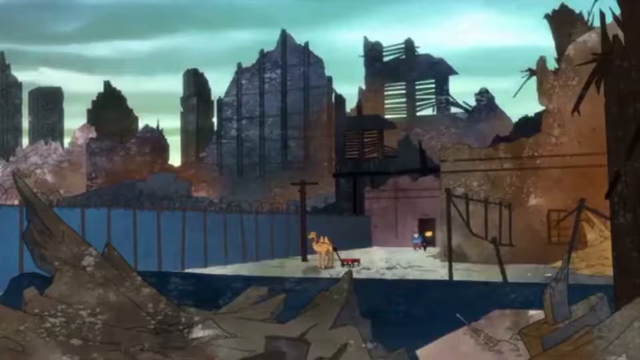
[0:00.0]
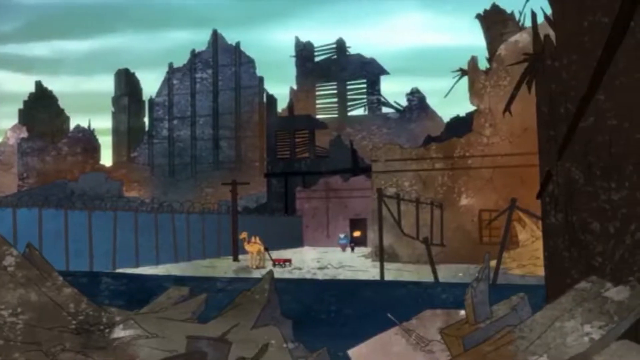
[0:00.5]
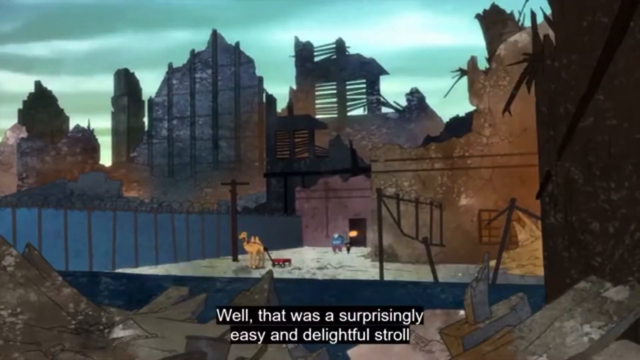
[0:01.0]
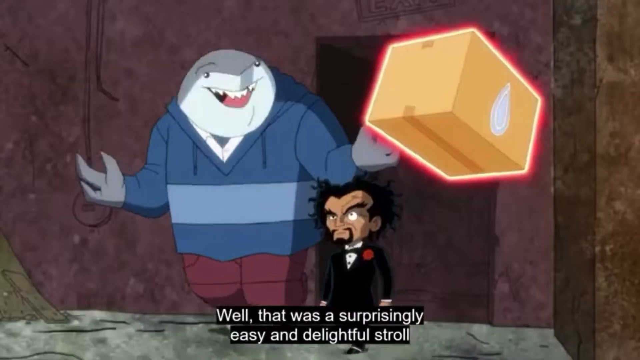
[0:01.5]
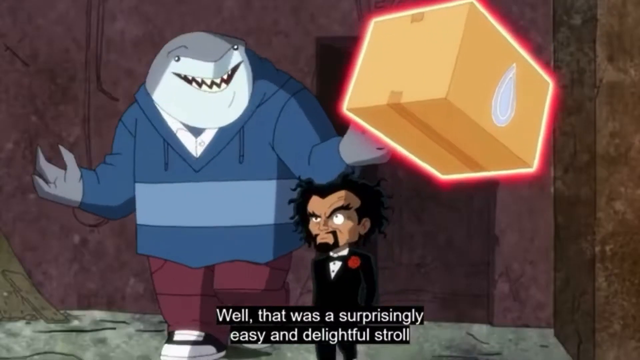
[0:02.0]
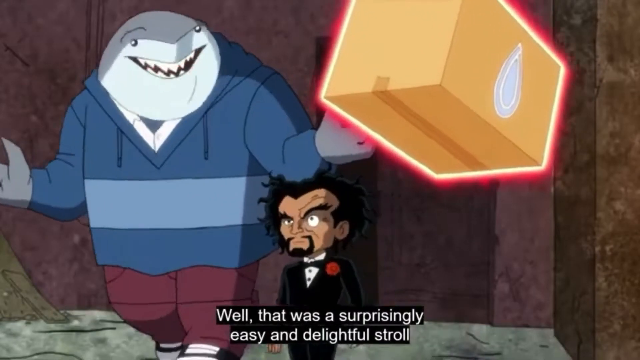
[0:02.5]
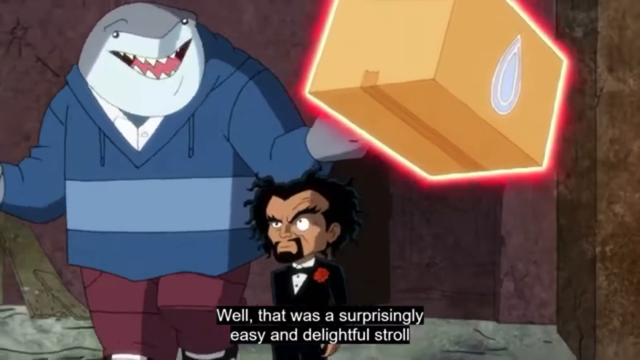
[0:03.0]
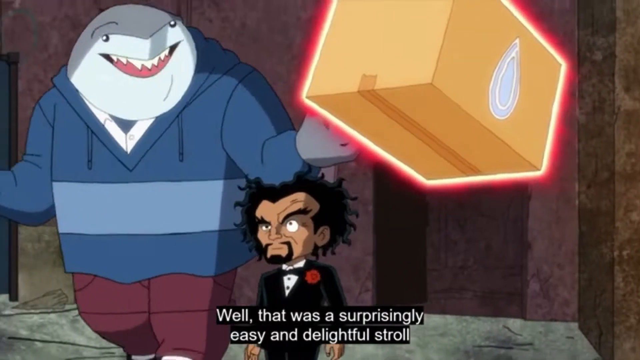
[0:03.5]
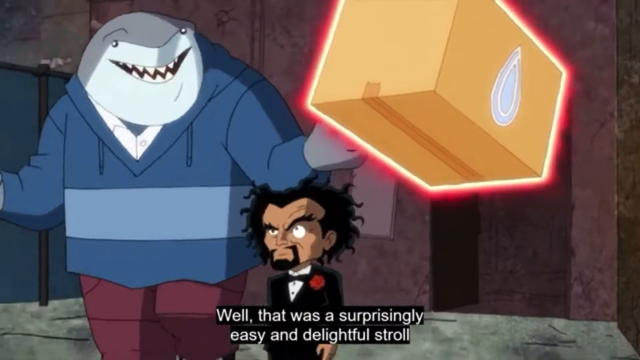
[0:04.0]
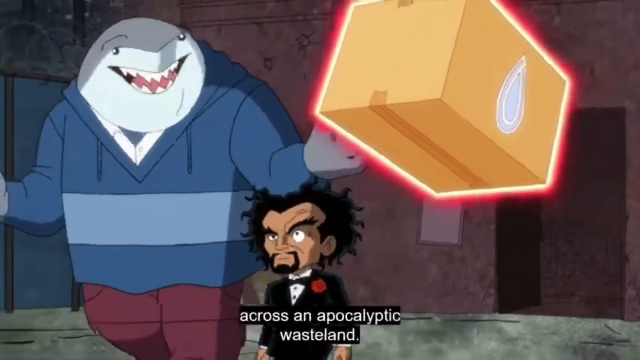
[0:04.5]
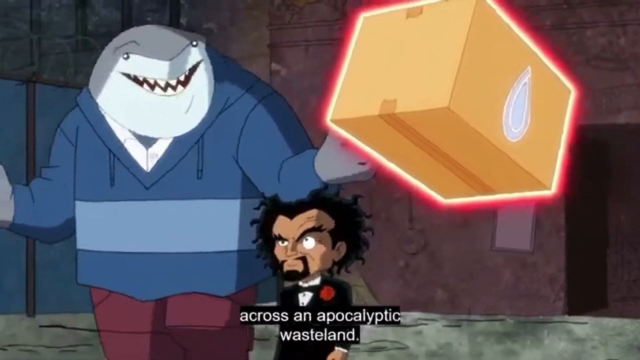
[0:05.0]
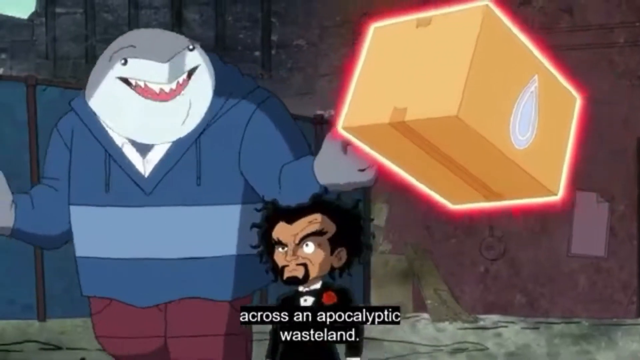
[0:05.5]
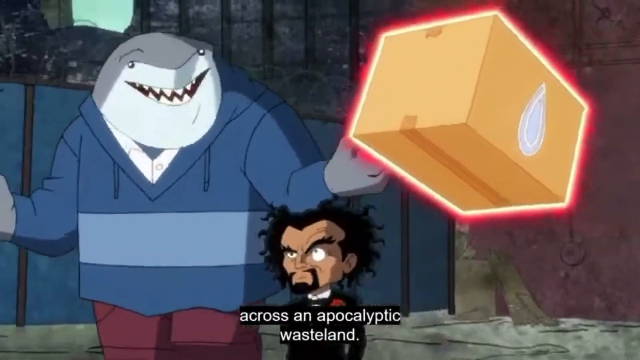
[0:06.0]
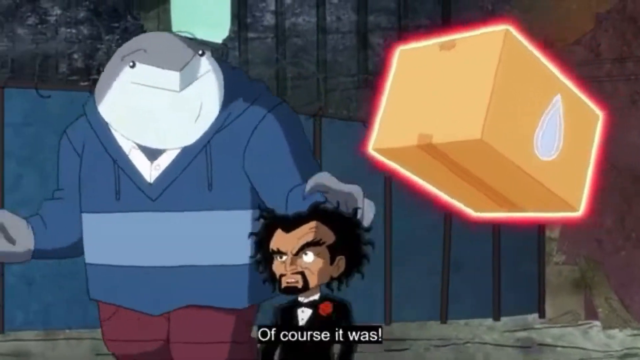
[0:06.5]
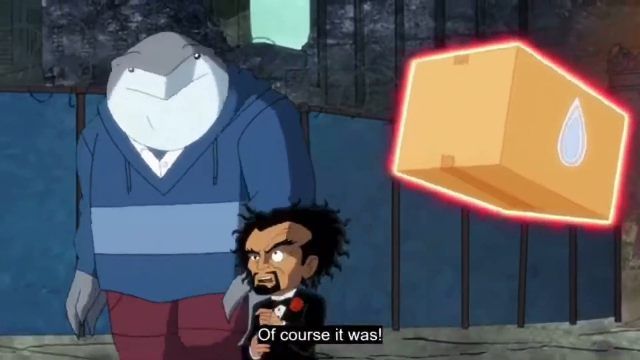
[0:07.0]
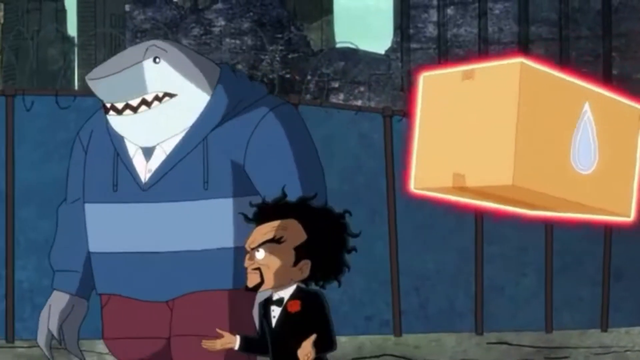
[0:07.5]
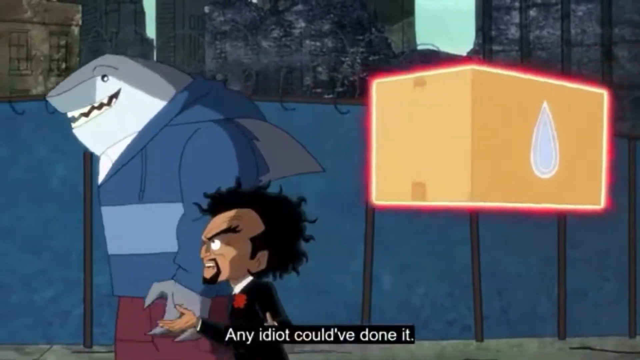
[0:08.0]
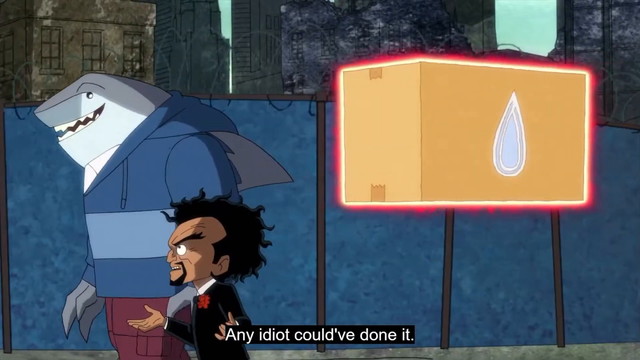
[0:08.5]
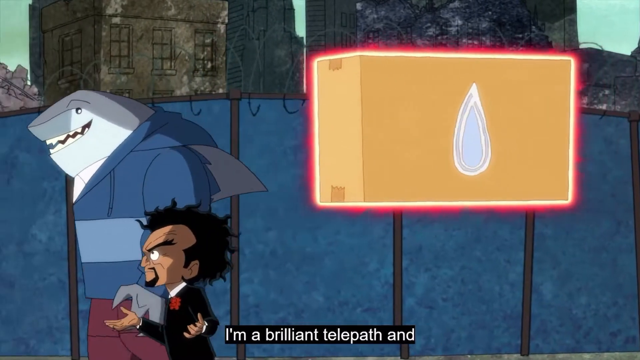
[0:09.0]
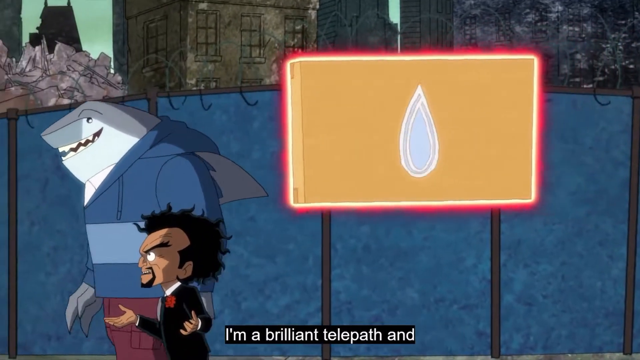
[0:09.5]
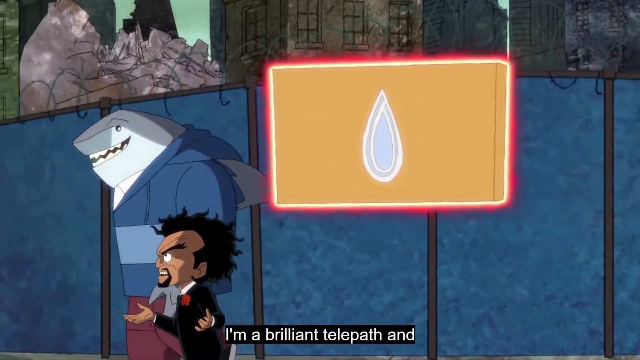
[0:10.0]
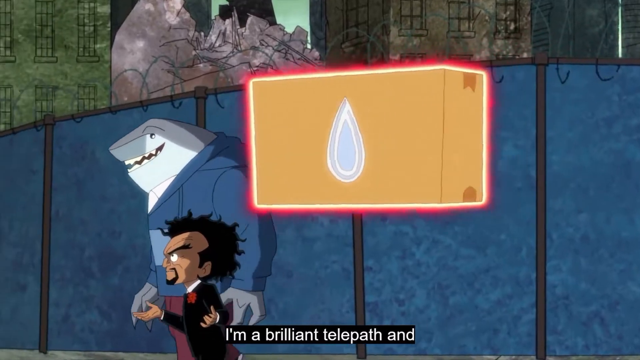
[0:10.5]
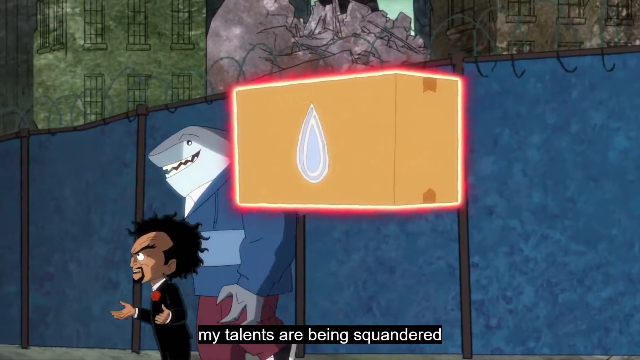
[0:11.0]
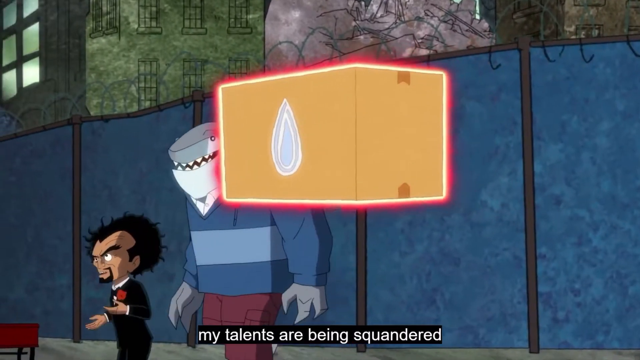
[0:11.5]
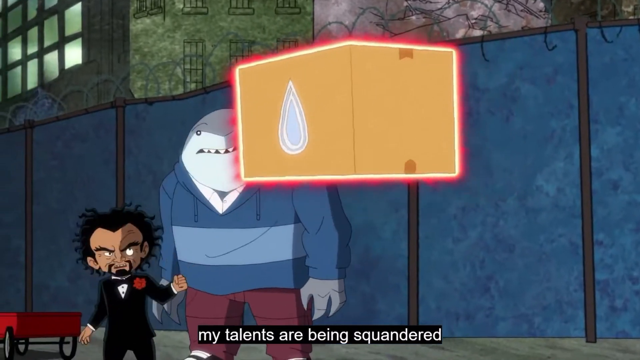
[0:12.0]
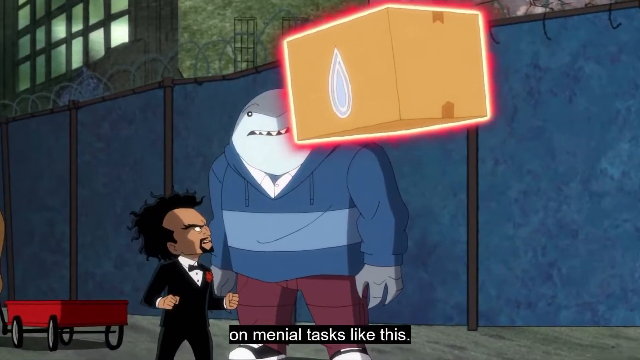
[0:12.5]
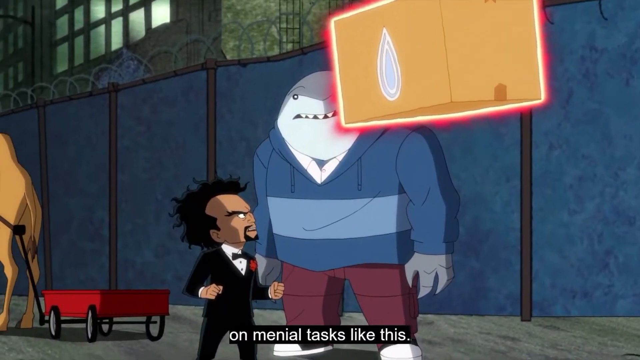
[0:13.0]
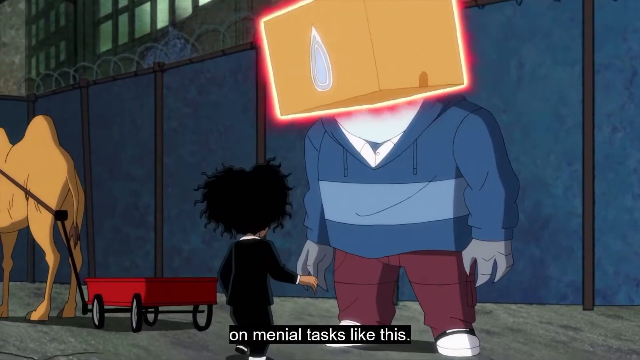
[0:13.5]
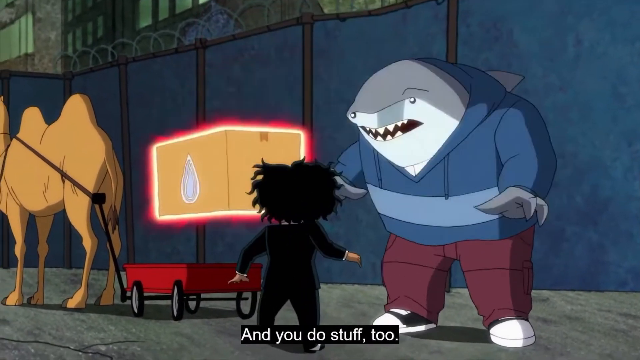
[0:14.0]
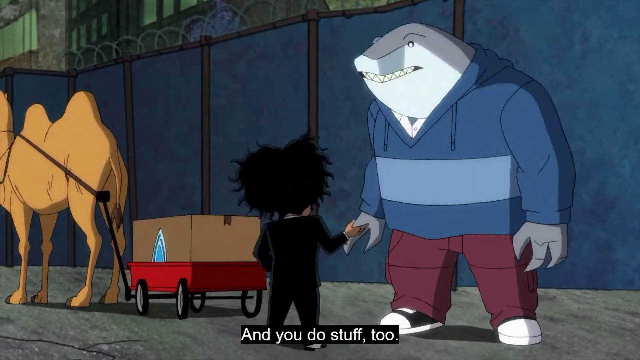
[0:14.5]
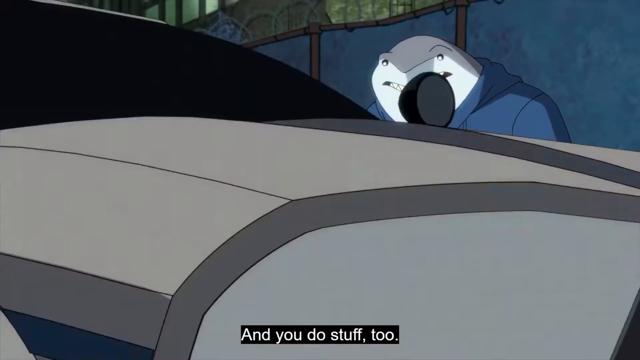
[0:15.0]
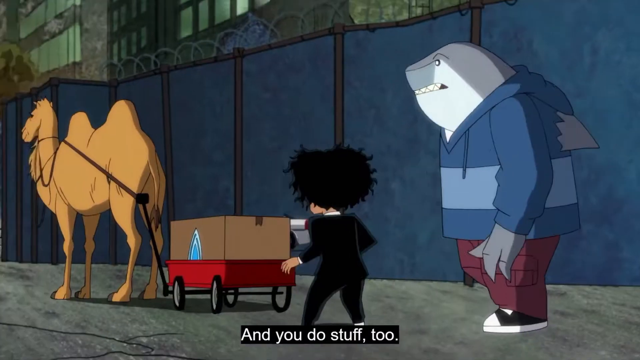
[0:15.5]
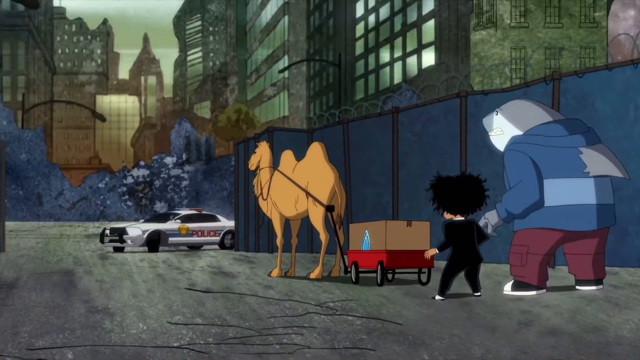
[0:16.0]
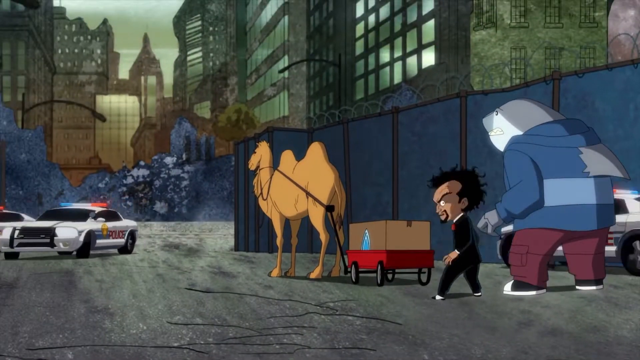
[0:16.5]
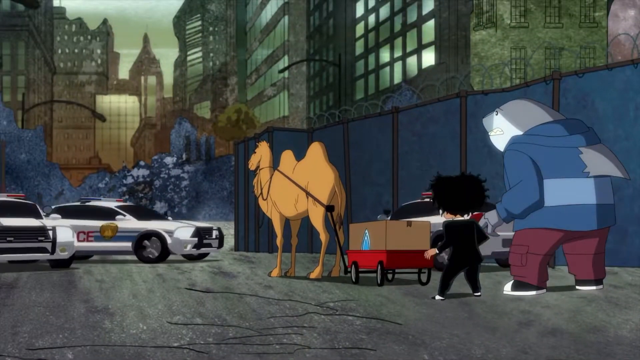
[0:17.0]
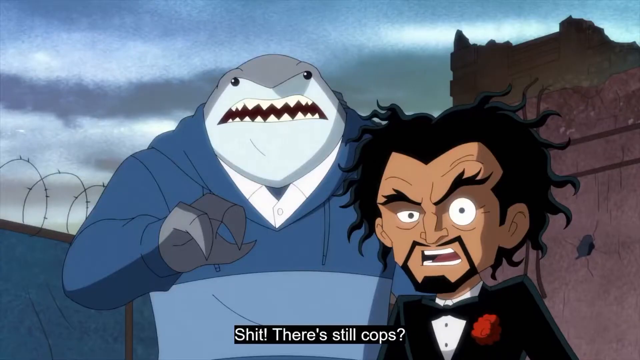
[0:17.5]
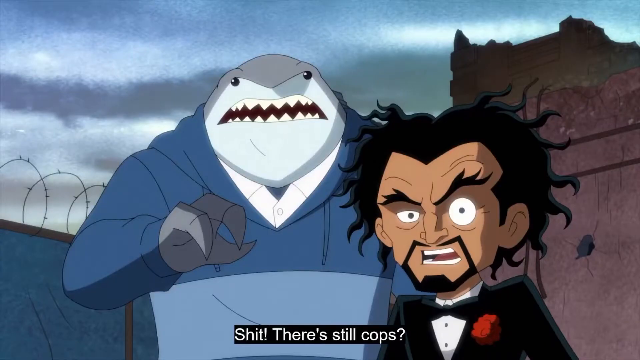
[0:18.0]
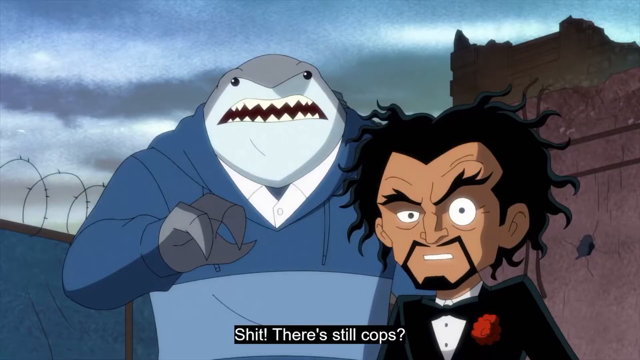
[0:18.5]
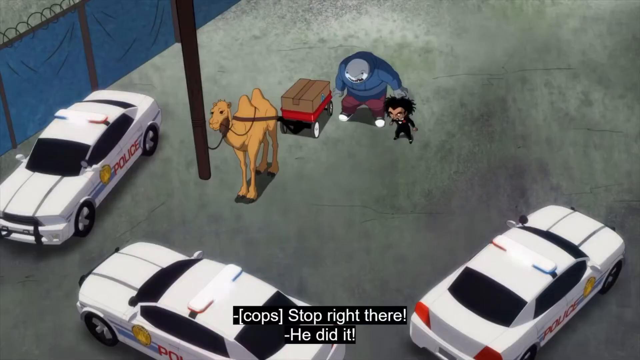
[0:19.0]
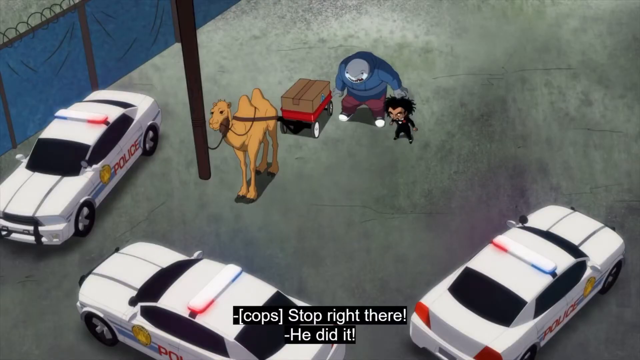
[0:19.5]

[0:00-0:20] The animation is set in a burnt-down or run-down city, where buildings still stand tall but are completely broken down, as if something catastrophic has just happened or they are very old and have started to wear away. On a platform there is a camel with a red pull trolley. A shark wearing a blue hoodie, red pants and sneakers walks in, speaking to someone below him who is shorter: a human with full facial hair, long black hair and a black suit with a red rose as a boutonniere. In the shark's right hand there is a red glowing cardboard box; the shark holds up his arms while walking and the box follows his hand, though he does not seem to be holding it properly. The shark keeps speaking as the two walk together, and then the box is no longer held by the shark but slowly moves along, following them. As they walk, the shark says that was a surprisingly easy and delightful stroll across an apocalyptic wasteland, and the shorter man says of course it was, any idiot could have done it, he is a brilliant telepath and his talents are being squandered on menial tasks like this, suggesting he is the one carrying the box. Eventually the box sits inside the red trolley pulled by the camel. Once it is put down, a car speeds past the screen, and three cop cars arrive. The shark and the man are surprised to see the cops, who try to apprehend them.